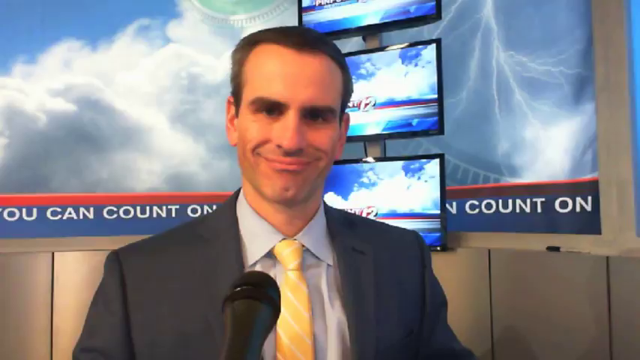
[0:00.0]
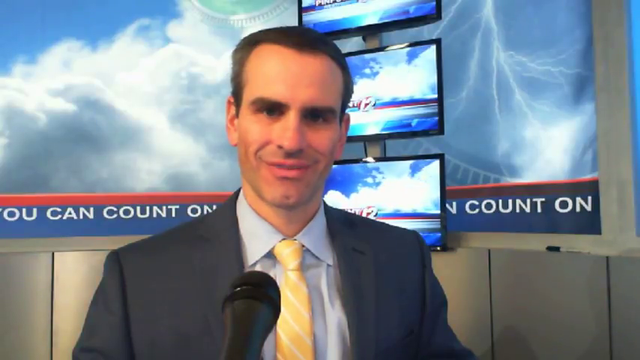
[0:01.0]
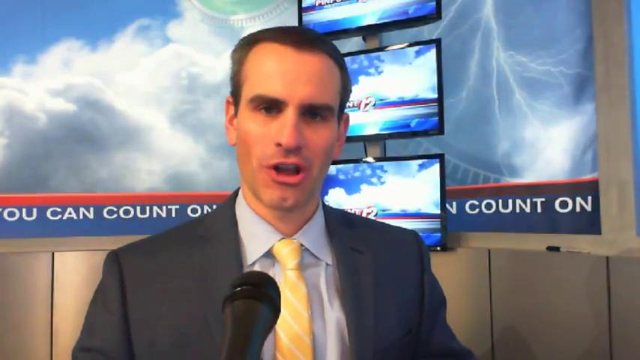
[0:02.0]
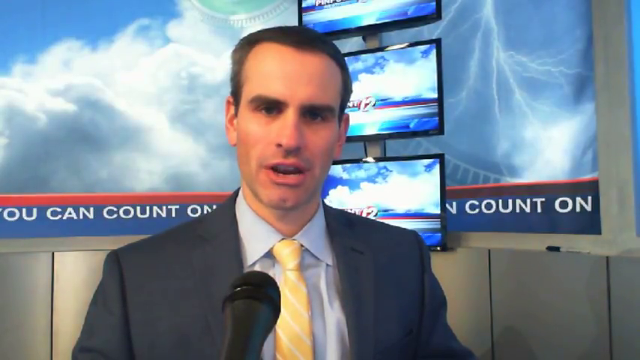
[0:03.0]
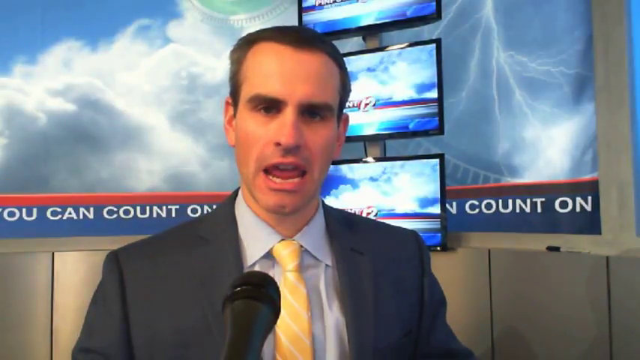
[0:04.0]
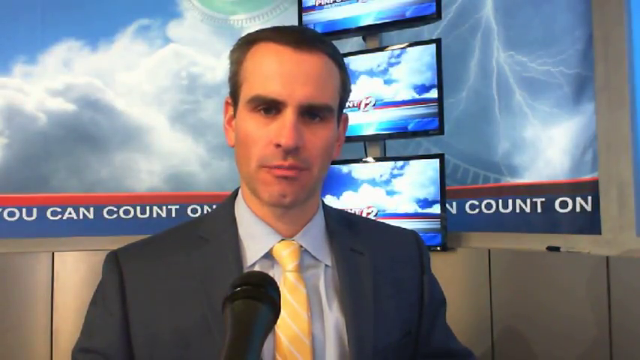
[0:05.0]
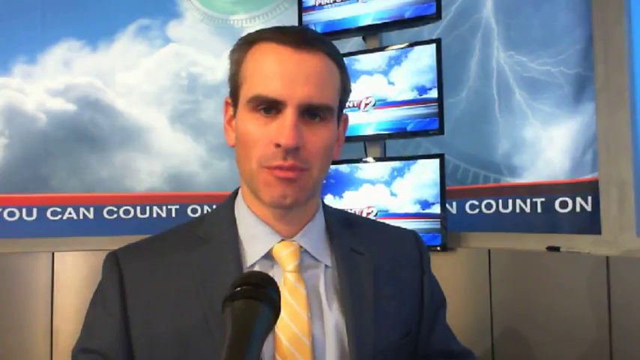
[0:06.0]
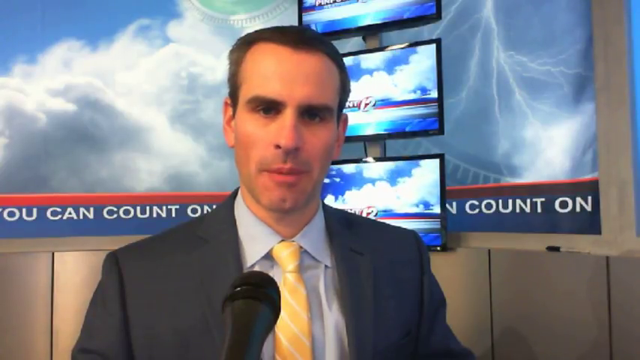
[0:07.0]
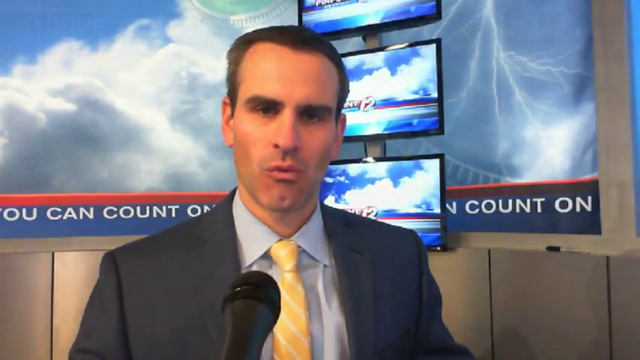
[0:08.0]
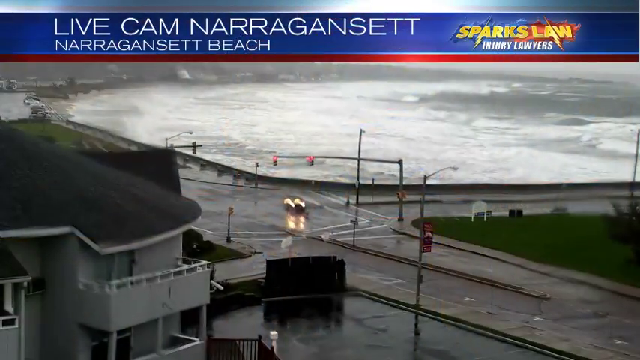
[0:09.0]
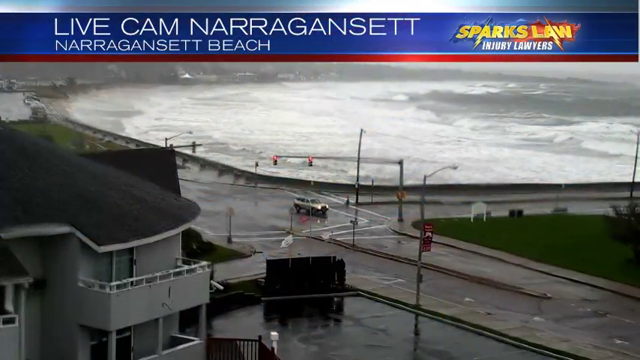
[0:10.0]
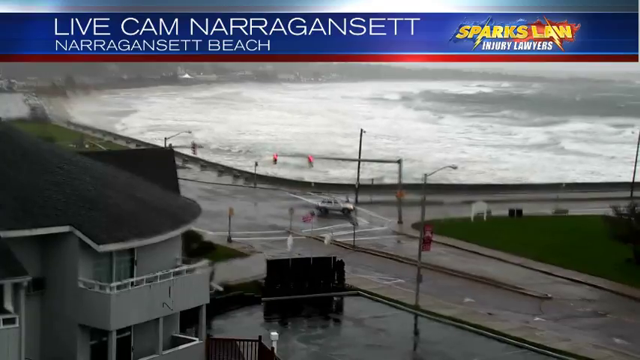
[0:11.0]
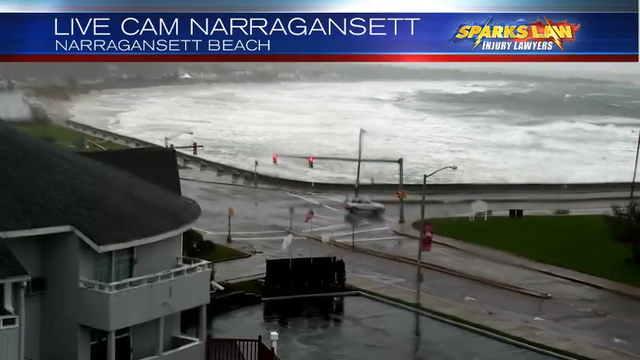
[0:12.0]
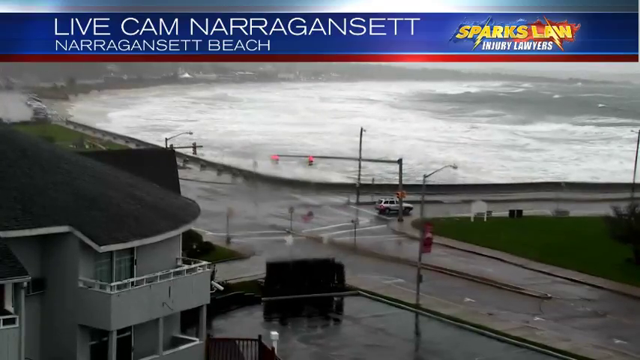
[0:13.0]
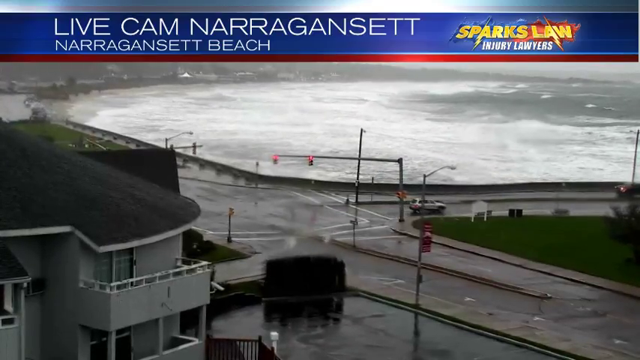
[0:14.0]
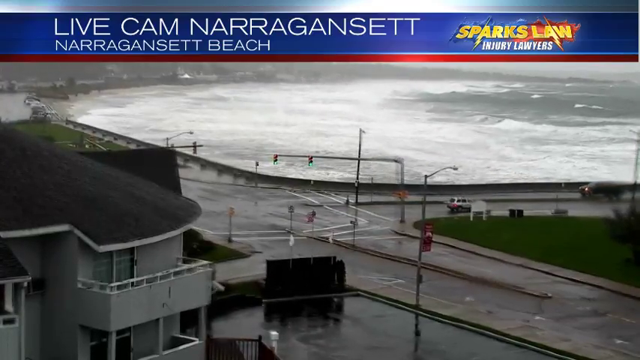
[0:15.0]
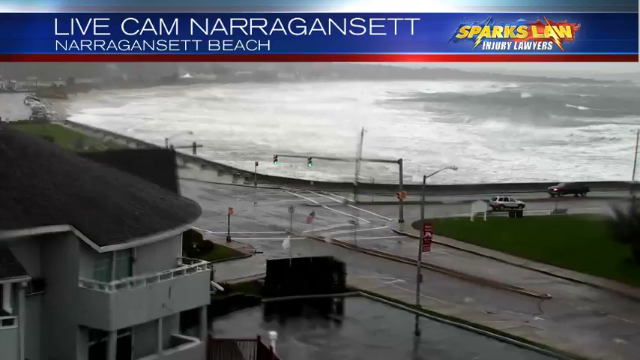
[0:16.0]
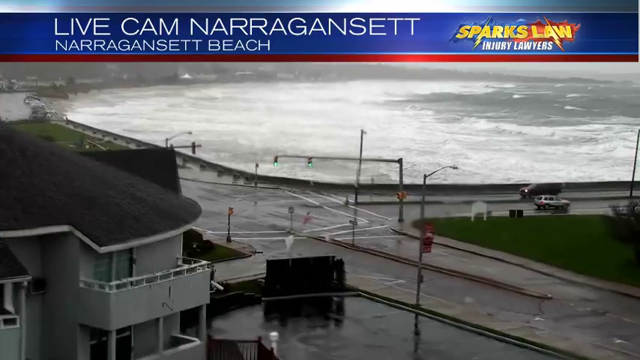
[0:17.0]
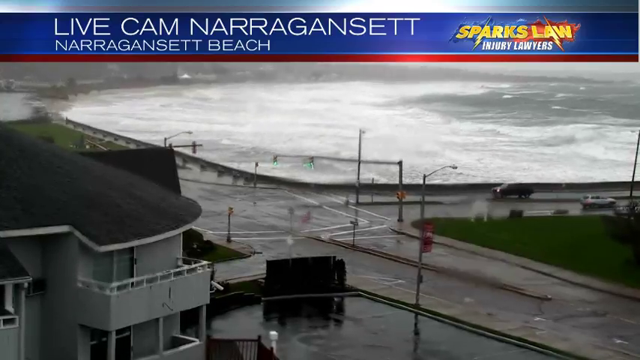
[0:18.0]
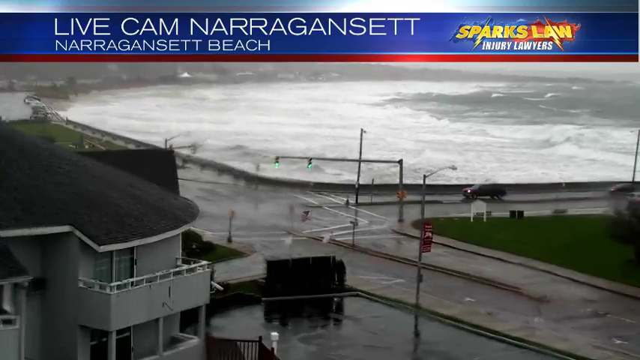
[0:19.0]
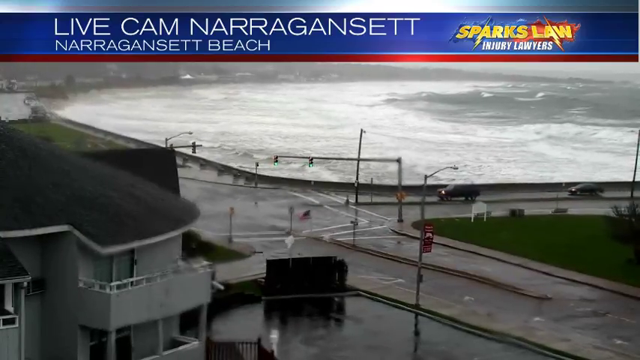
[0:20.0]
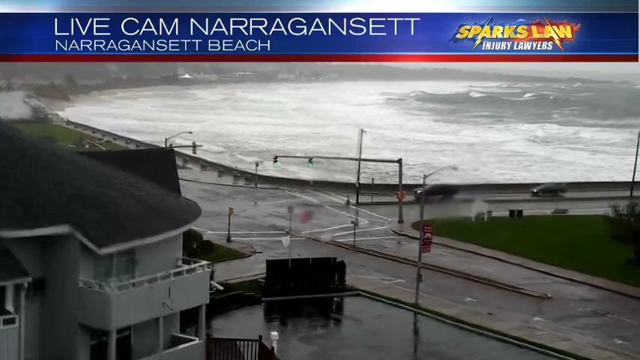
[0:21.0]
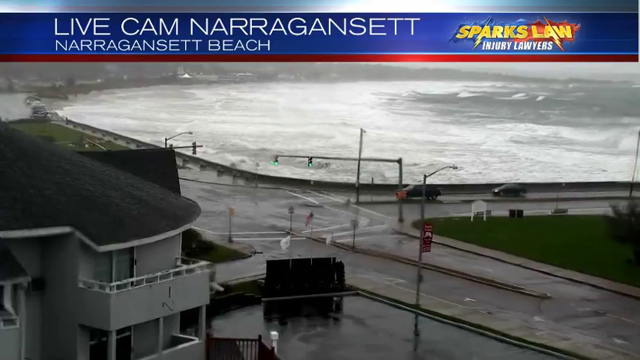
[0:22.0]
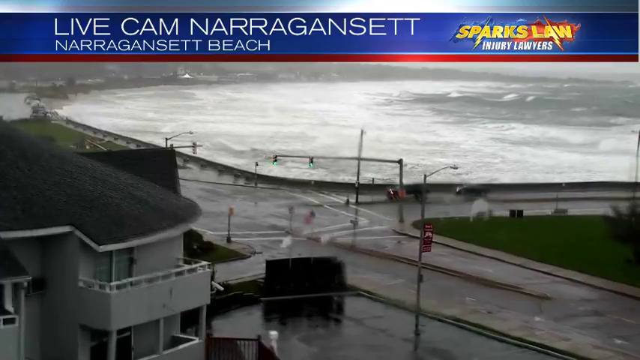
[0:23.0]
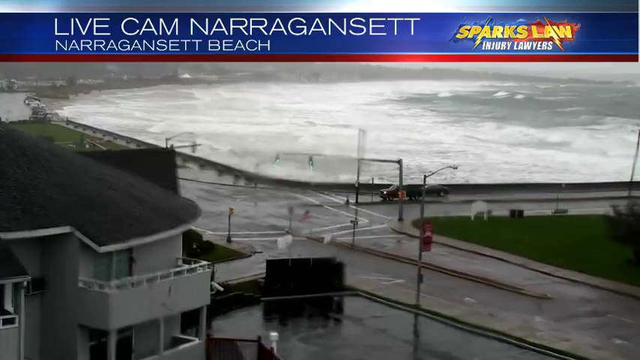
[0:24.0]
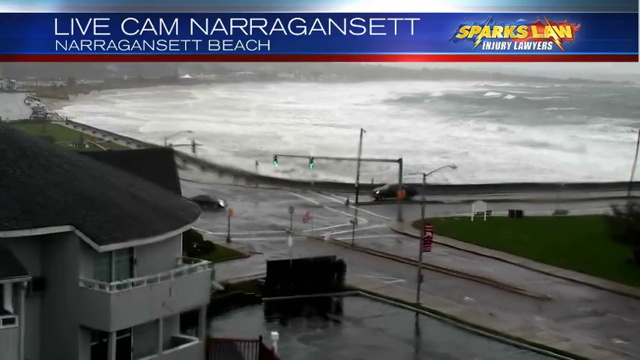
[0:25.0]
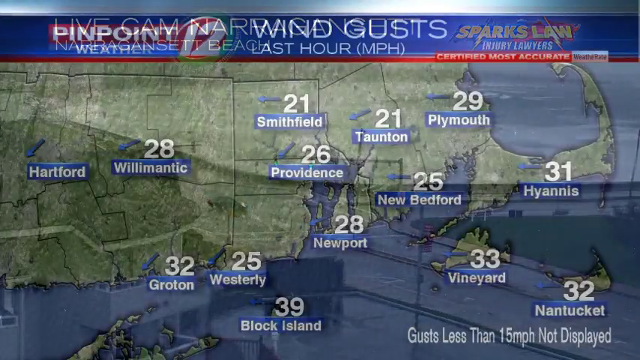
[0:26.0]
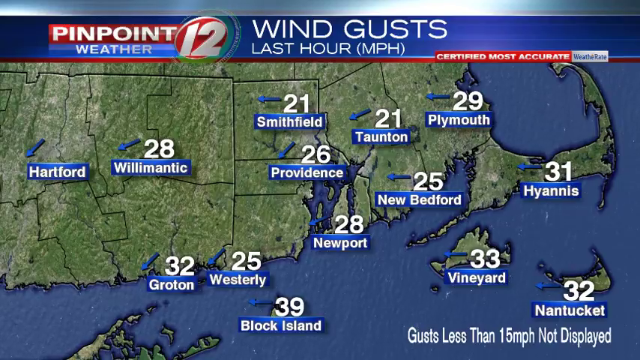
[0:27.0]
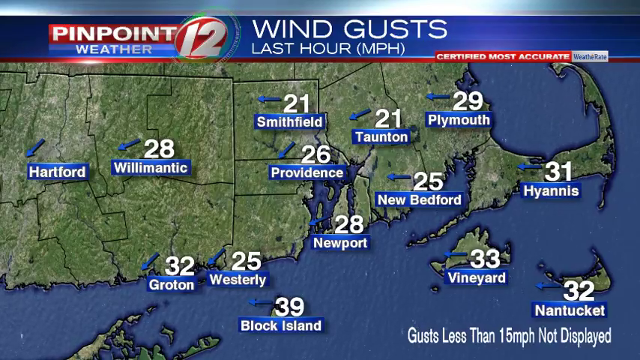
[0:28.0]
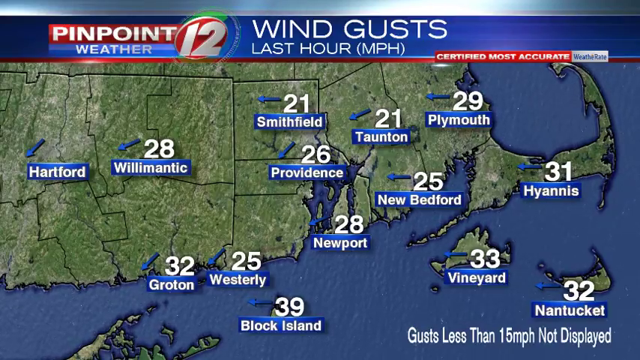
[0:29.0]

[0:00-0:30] The video opens on a newscaster seen from the chest up, looking at the camera. He wears a dark gray suit jacket, a white shirt, and a yellow tie. Behind him are two screens: the one on the left shows cumulus clouds against a blue sky, and the one on the right shows a lightning strike. Between the two, three television screens go up, and the words "you can count on" appear on a banner behind him. The television screens show clouds moving across them as he speaks to the camera. An ad for Sparks Law Injury Lawyers appears, with "Sparks Law" in yellow and "Injury Lawyers" in white. The image then changes to two roads beside the ocean that intersect perpendicularly, with stoplights and very little traffic. The ocean is roiling and whipped up with waves, and the camera lens looks like it is getting rained on, with wet drops on it. A building is on the left side of the screen, and on the right side some cars come from the ocean's direction toward the intersection. Next comes a map of Southern New England showing Massachusetts, Rhode Island, Connecticut, Martha's Vineyard and Nantucket. The top reads "wind gusts last hour MPH," with "pinpoint weather 12" to the left of that and "certified most accurate" below. Numerous towns are named, with numbers above them illustrating the wind gusts.